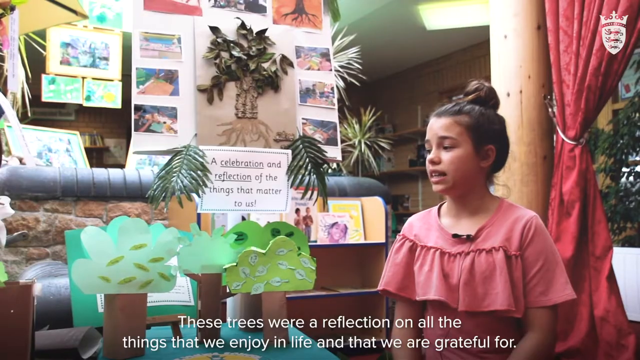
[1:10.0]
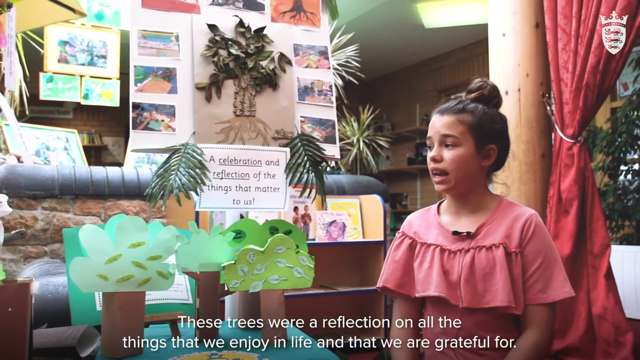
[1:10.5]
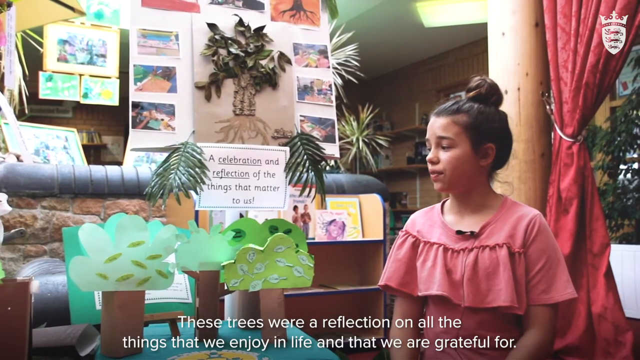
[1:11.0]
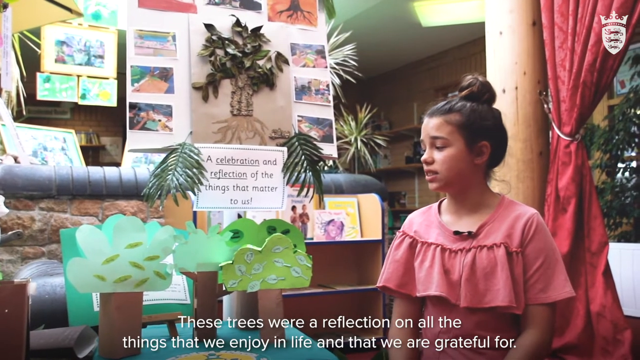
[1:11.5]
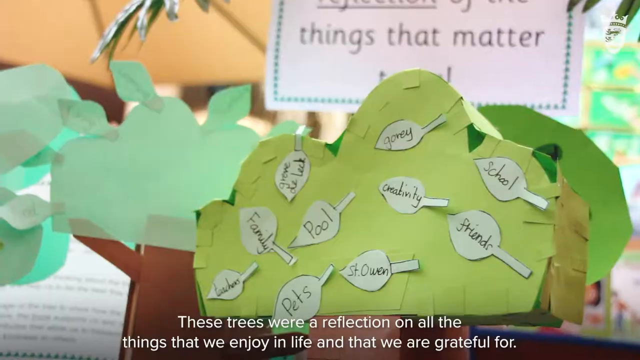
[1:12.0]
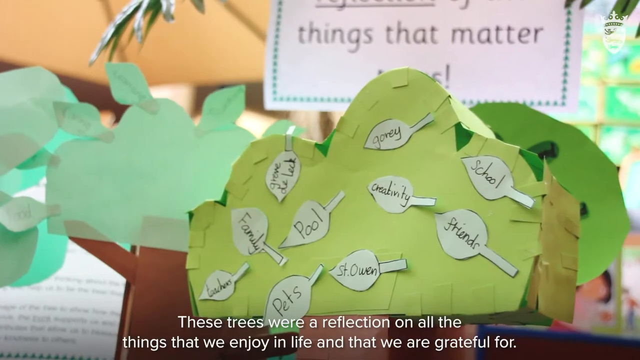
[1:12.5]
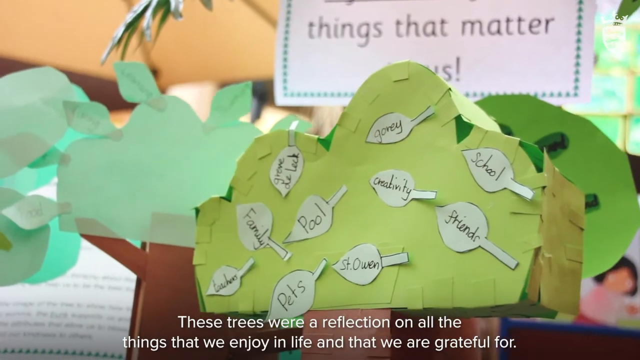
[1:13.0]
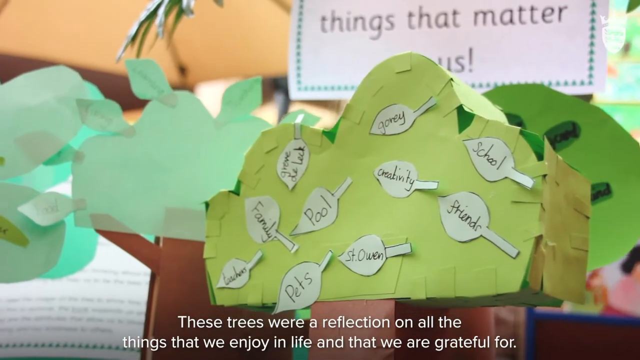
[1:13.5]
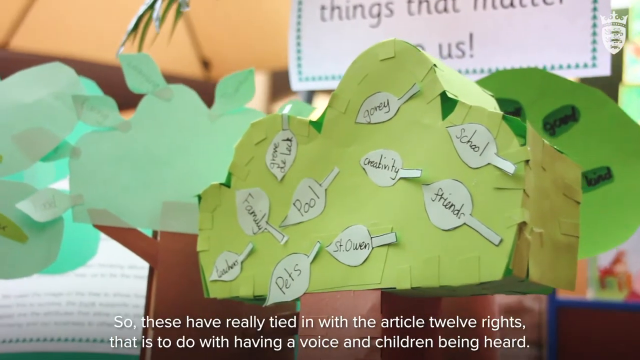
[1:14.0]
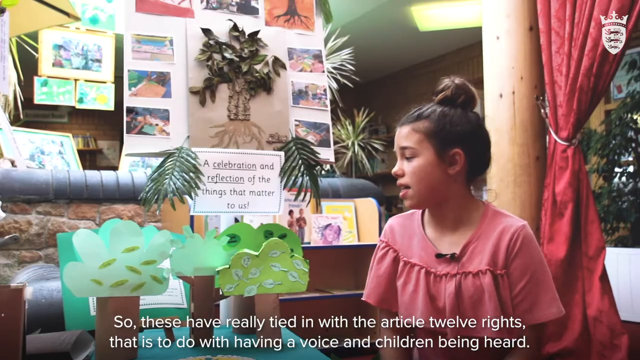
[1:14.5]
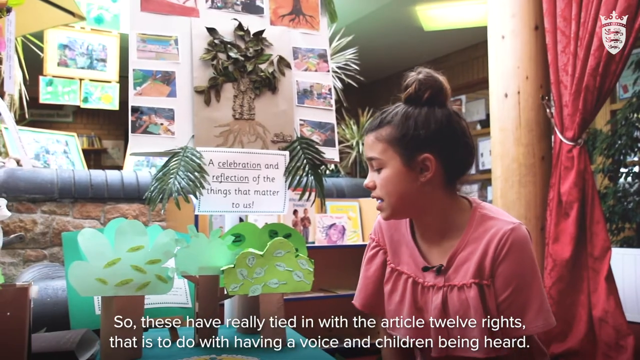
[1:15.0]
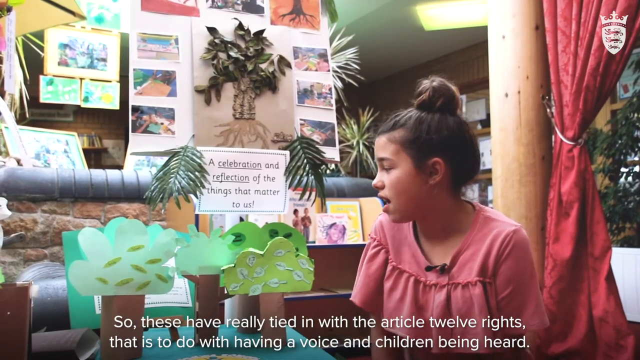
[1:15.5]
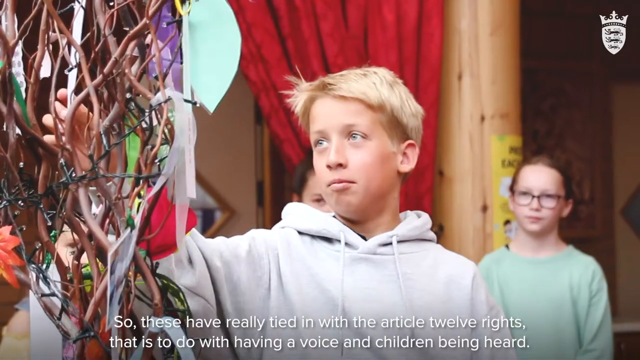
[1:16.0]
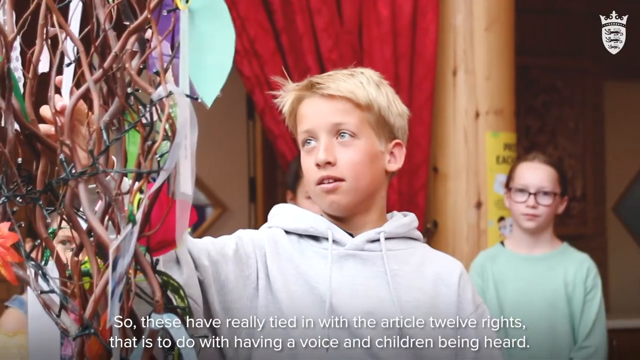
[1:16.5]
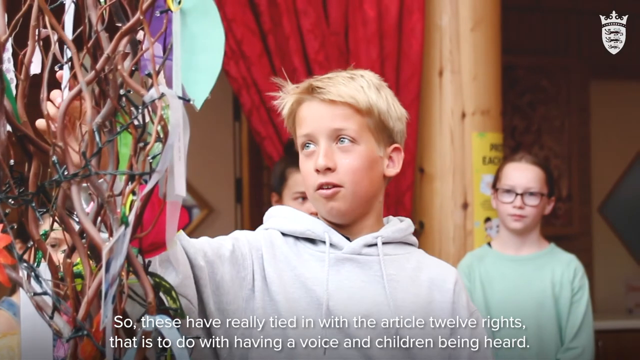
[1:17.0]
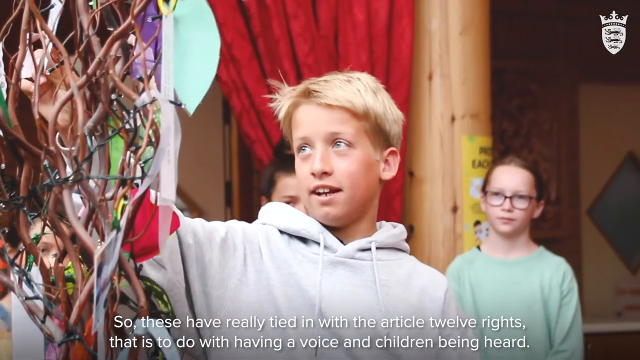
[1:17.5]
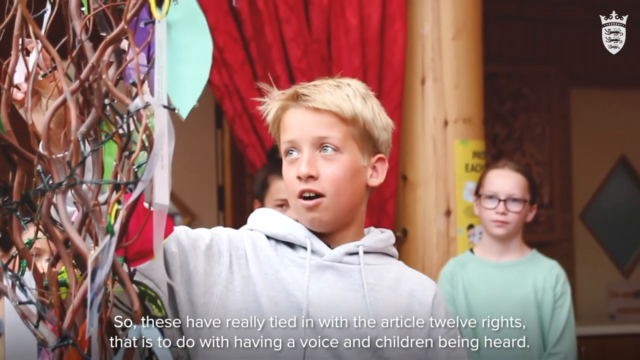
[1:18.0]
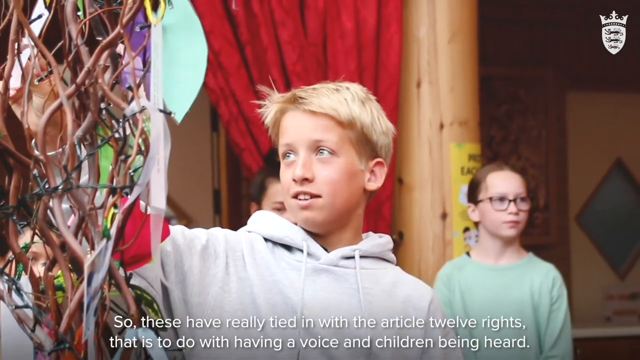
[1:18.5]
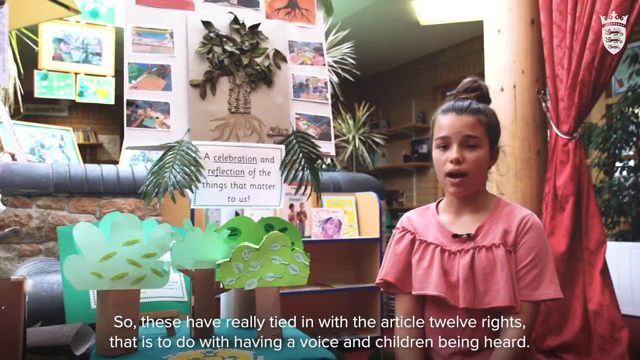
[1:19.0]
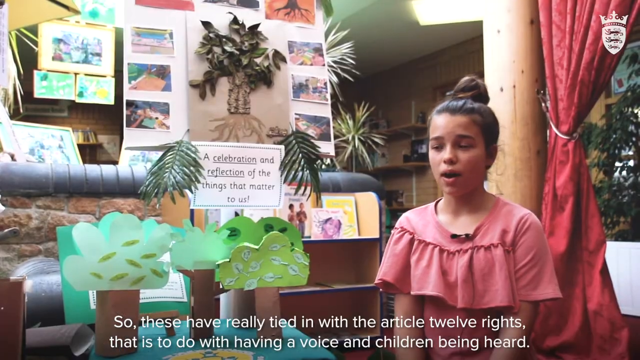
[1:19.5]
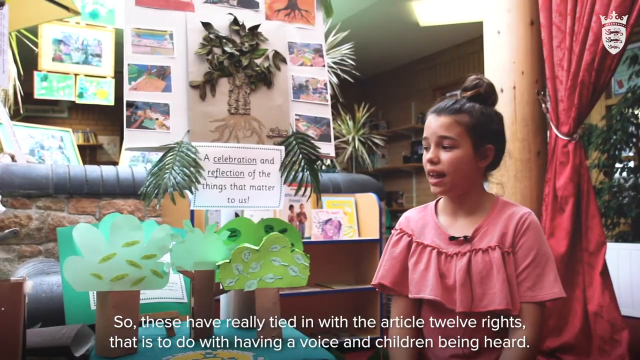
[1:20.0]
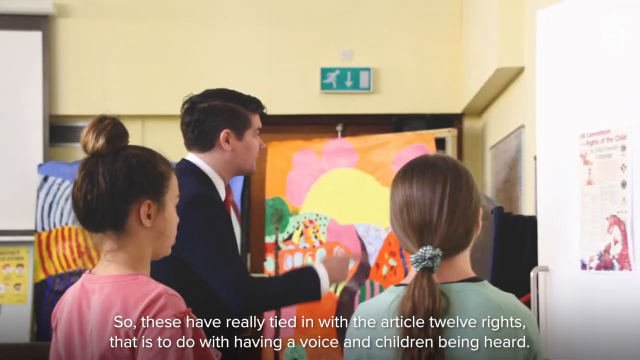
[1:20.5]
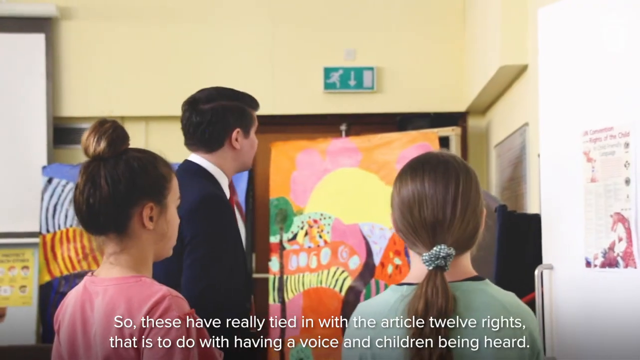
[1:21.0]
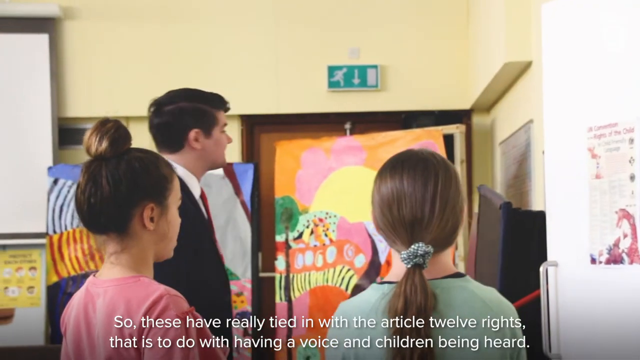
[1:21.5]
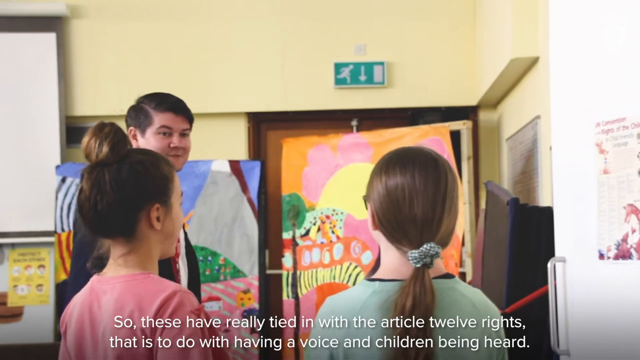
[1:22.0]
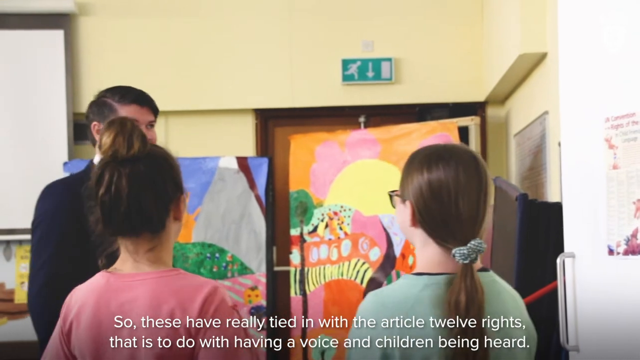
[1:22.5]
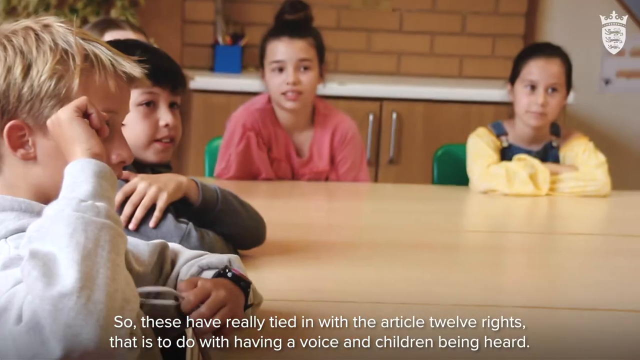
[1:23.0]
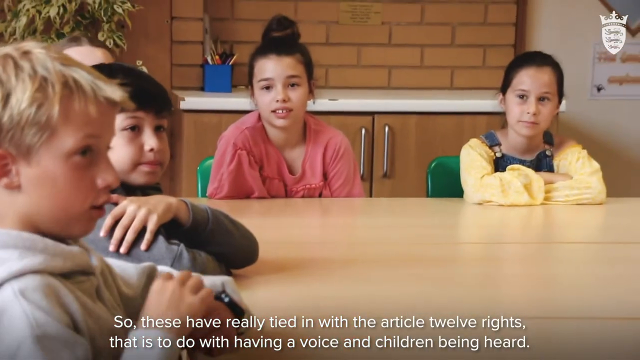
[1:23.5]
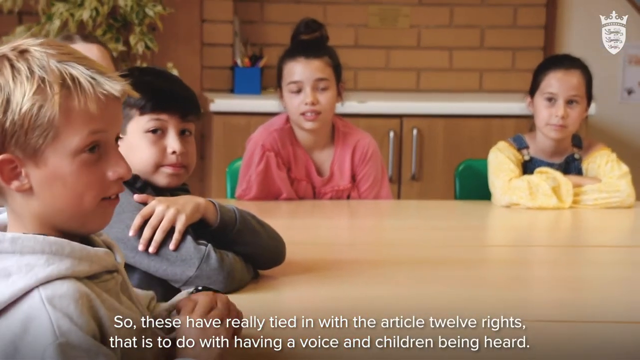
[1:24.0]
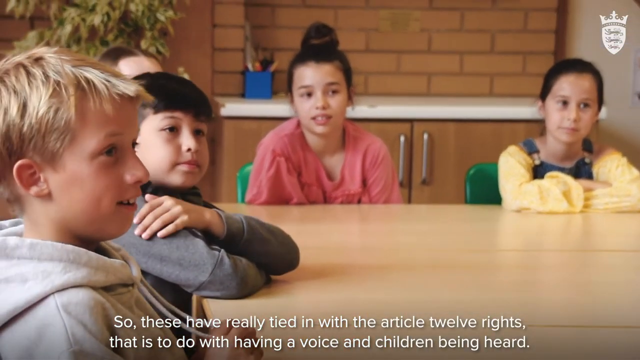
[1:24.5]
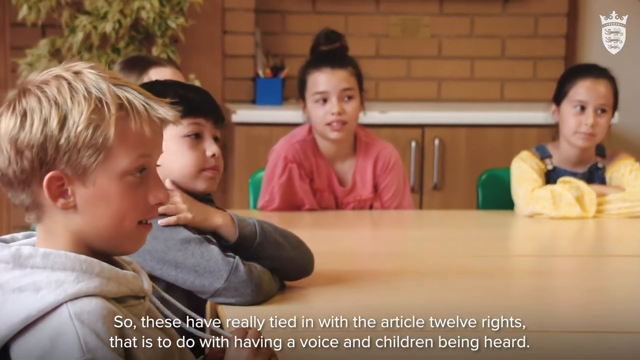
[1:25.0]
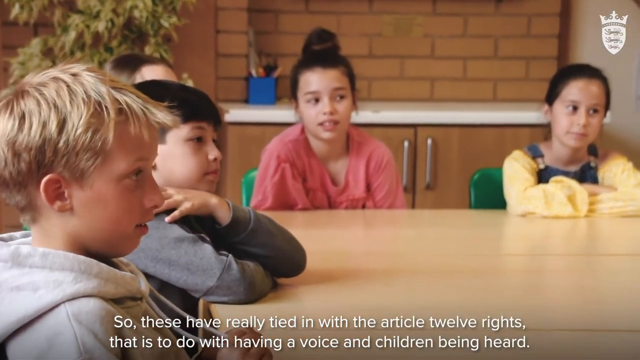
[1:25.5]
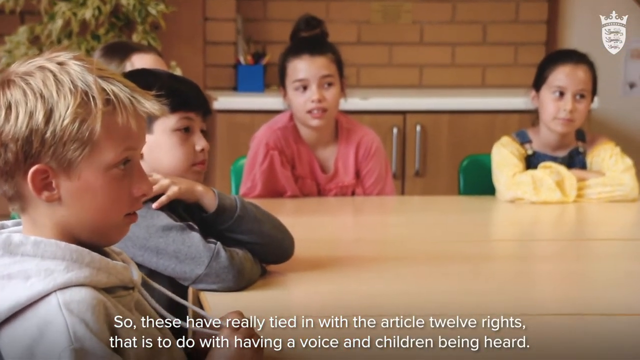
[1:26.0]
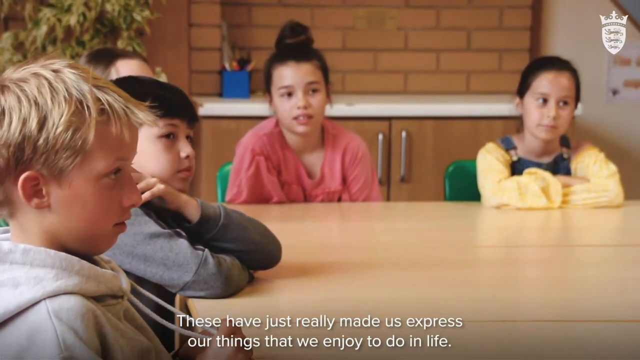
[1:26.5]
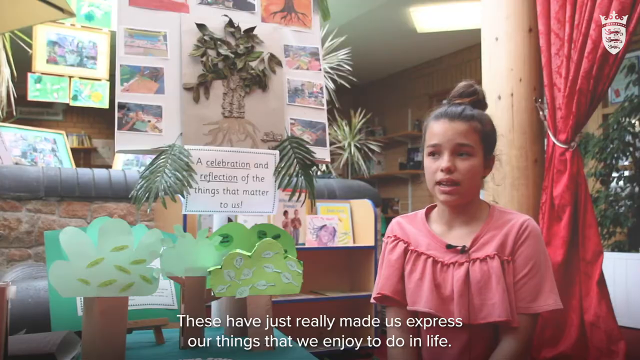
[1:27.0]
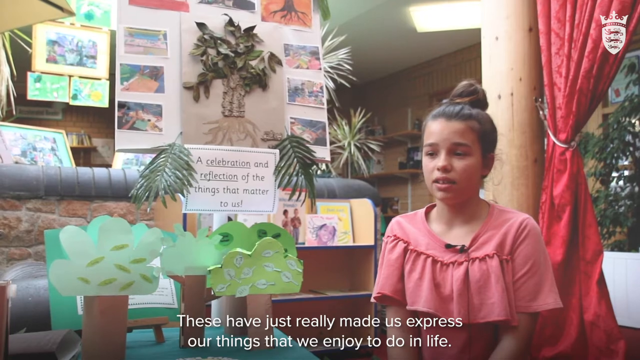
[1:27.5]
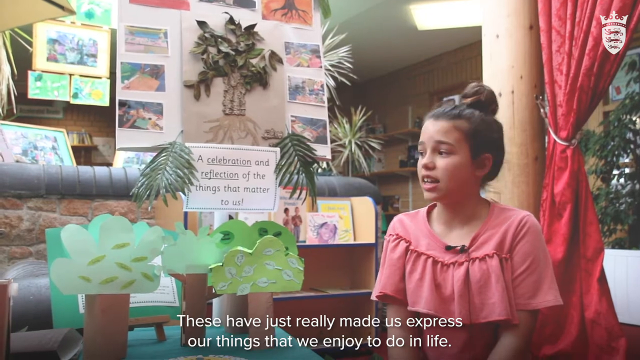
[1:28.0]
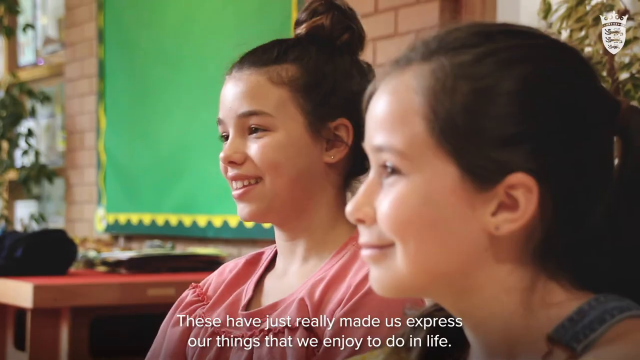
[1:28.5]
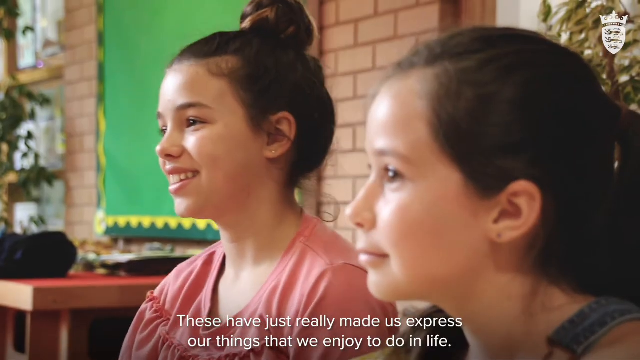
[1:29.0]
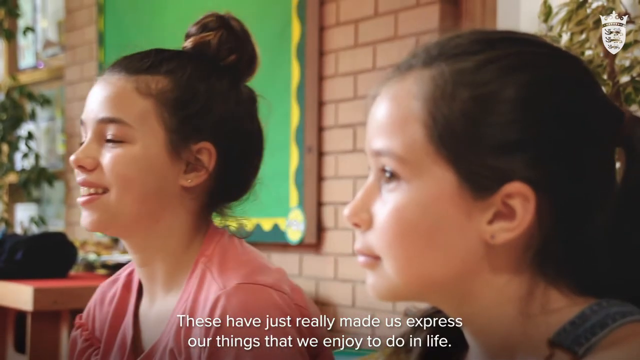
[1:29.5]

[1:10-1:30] The text on screen says the trees were "a reflection of all the things we enjoy in life and we're grateful for". Article 12 rights are mentioned, apparently about giving children a voice to be heard. The video cuts to the other children and back to the girl talking, then to footage of what seems to be the professor walking with the students into the room where the art is presented. It cuts to a table where the students are sitting and talking to the interviewer, reflecting that "these things have really made us express what we love in life".